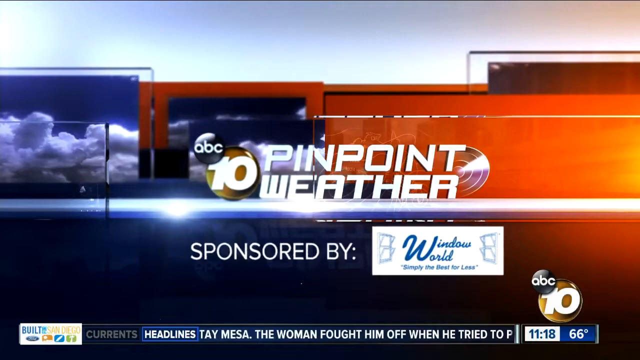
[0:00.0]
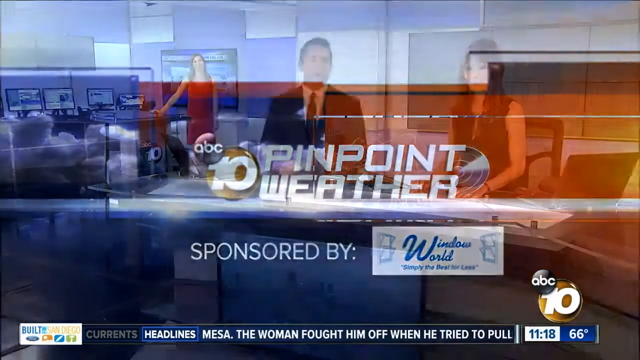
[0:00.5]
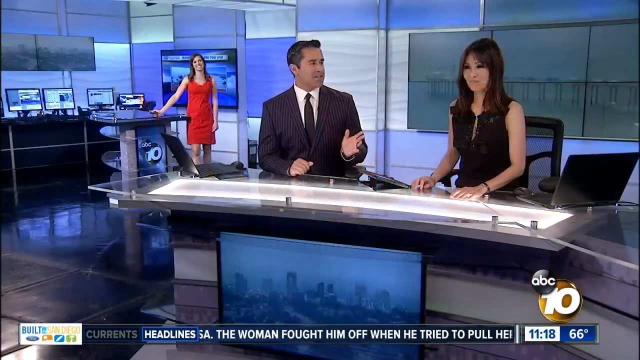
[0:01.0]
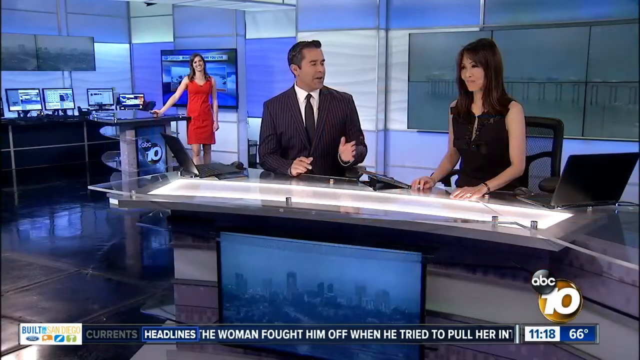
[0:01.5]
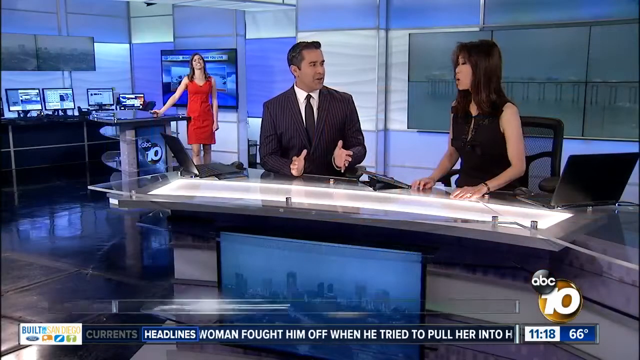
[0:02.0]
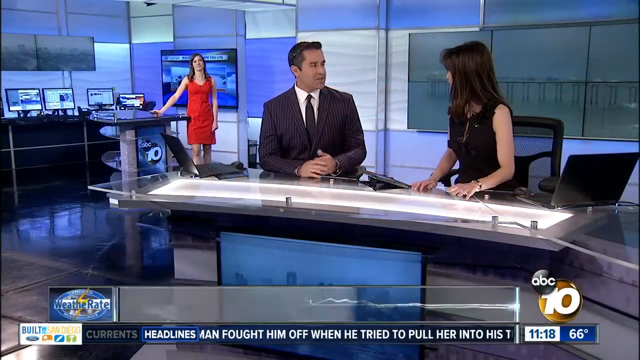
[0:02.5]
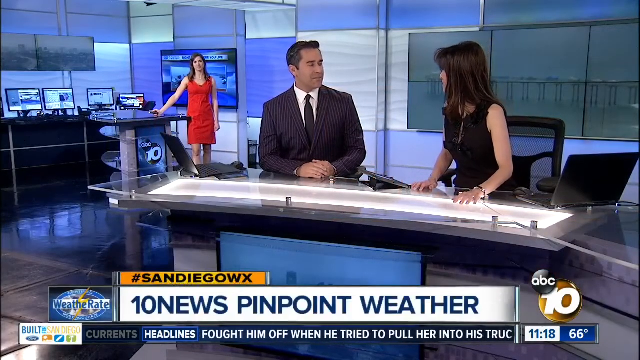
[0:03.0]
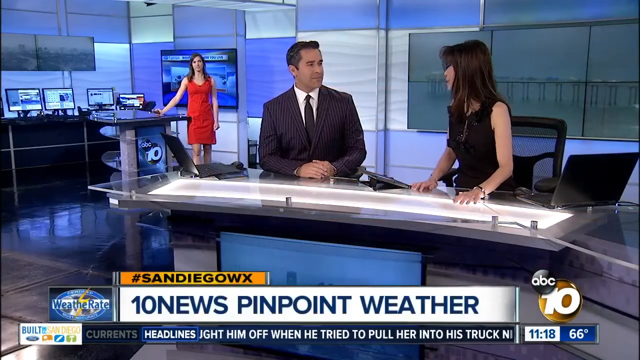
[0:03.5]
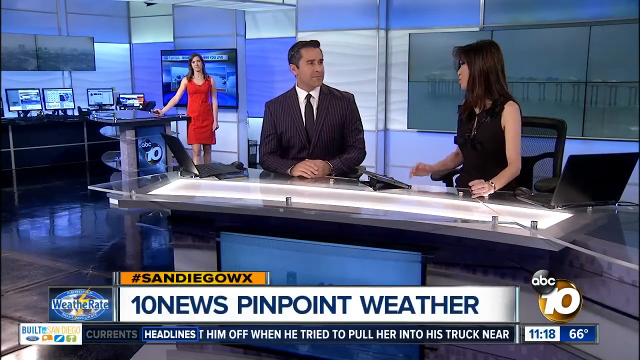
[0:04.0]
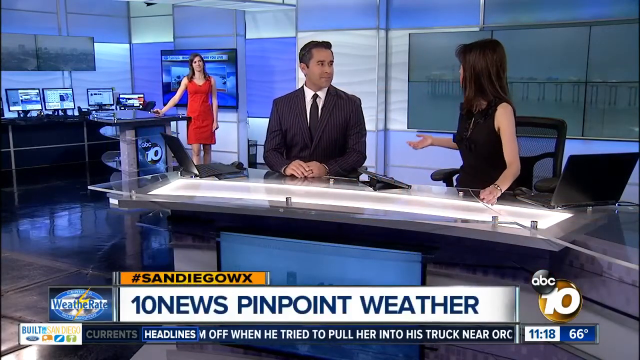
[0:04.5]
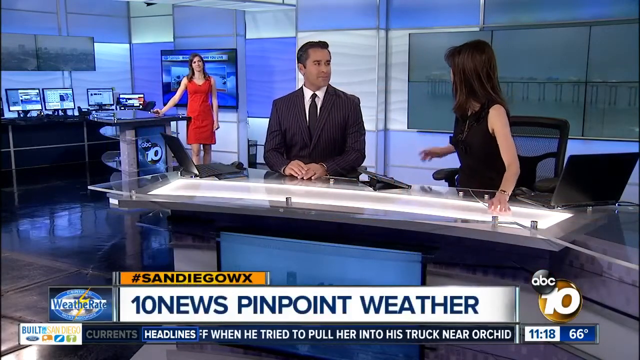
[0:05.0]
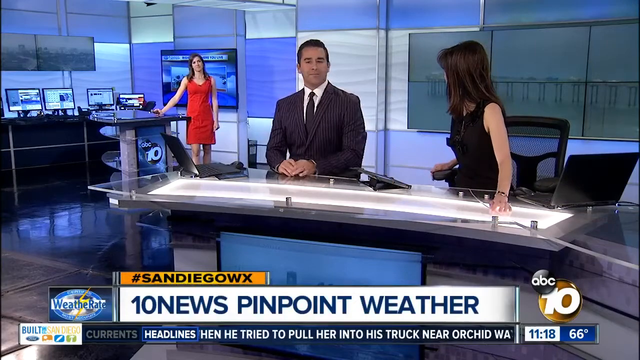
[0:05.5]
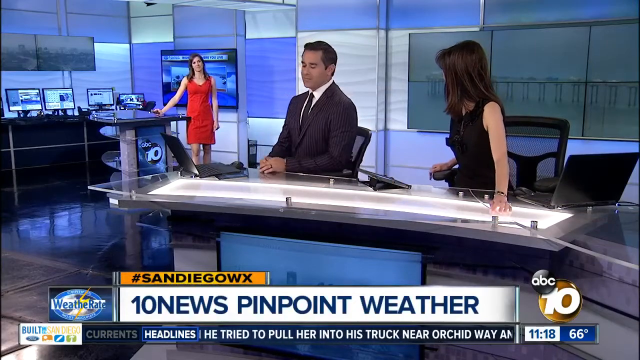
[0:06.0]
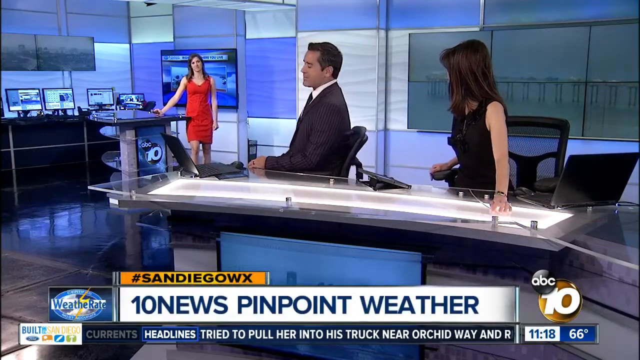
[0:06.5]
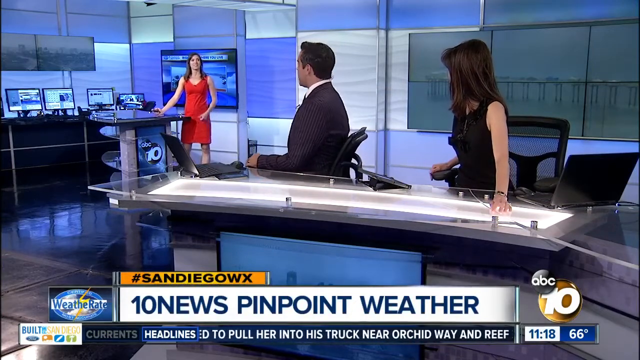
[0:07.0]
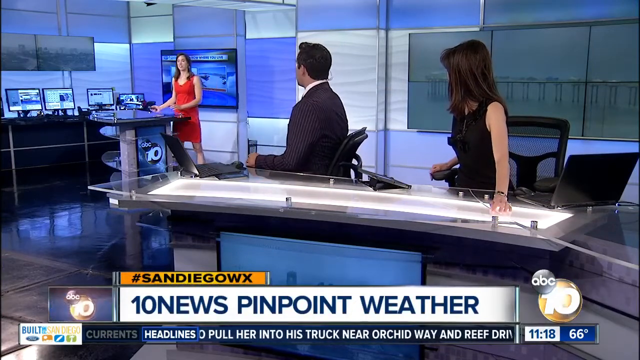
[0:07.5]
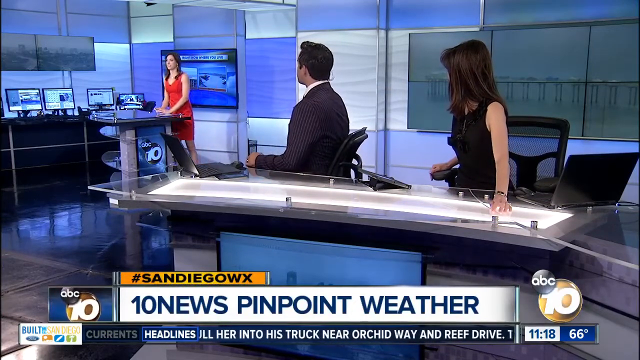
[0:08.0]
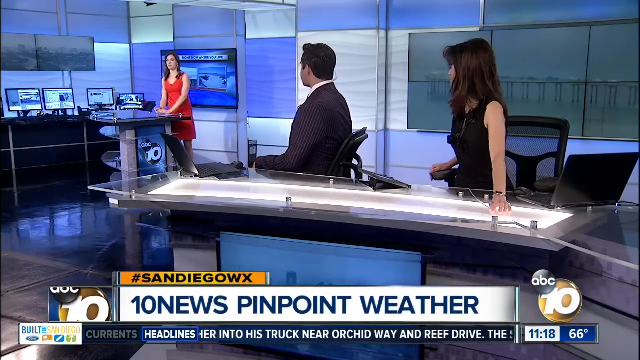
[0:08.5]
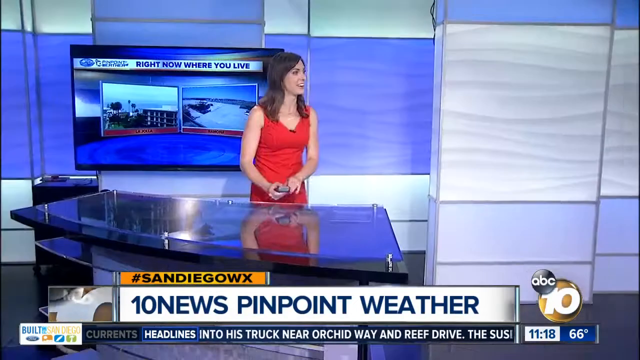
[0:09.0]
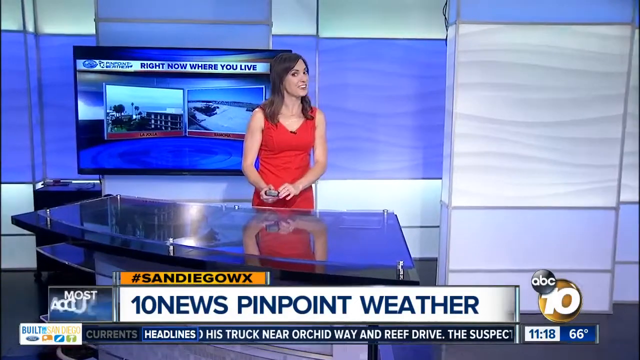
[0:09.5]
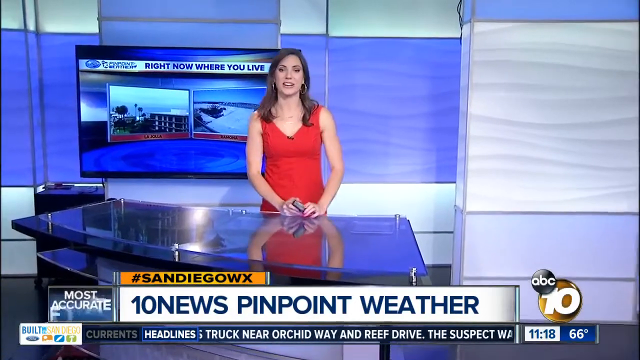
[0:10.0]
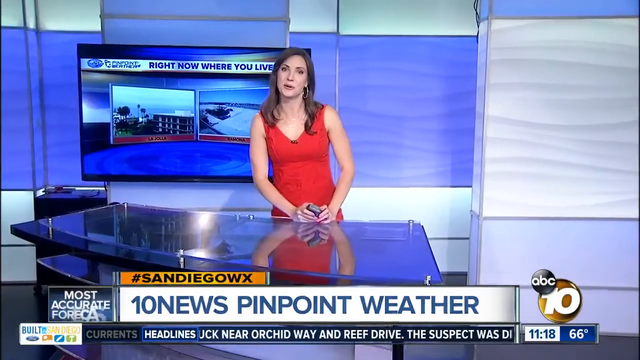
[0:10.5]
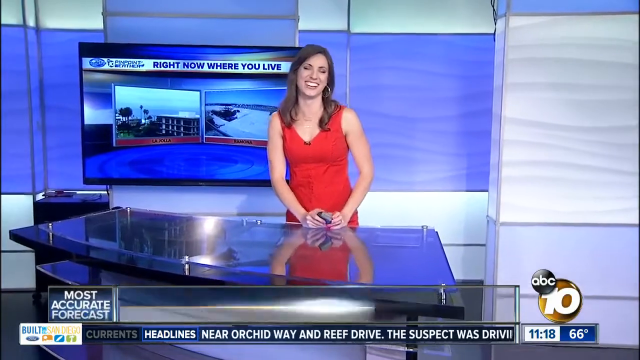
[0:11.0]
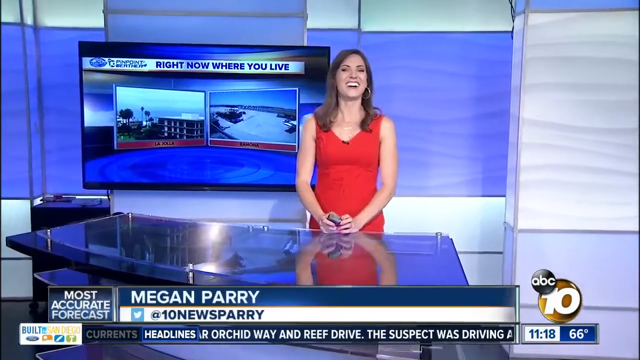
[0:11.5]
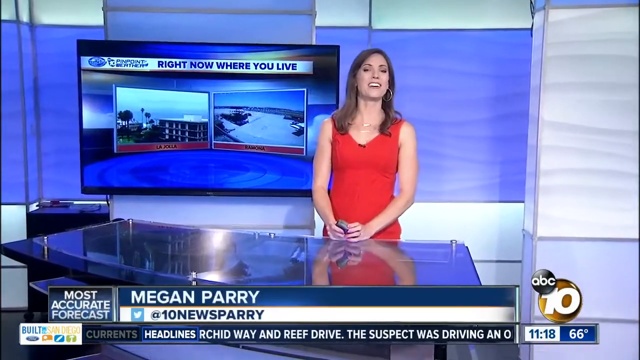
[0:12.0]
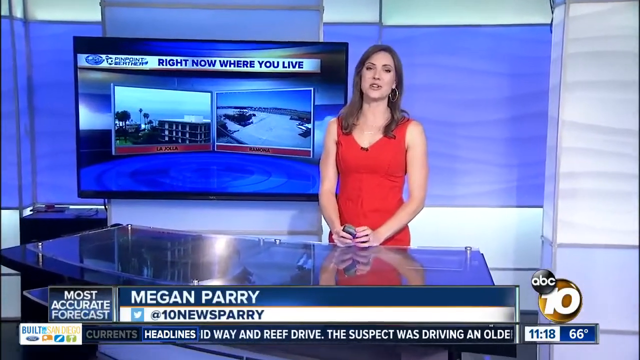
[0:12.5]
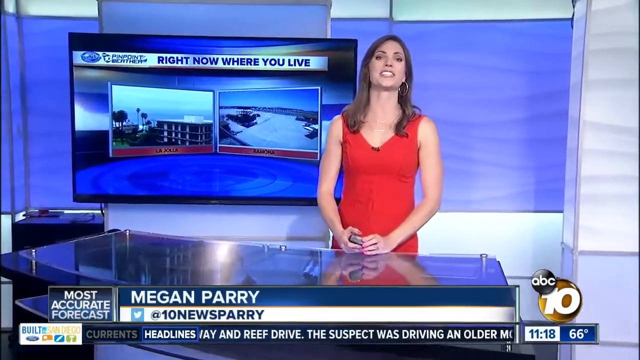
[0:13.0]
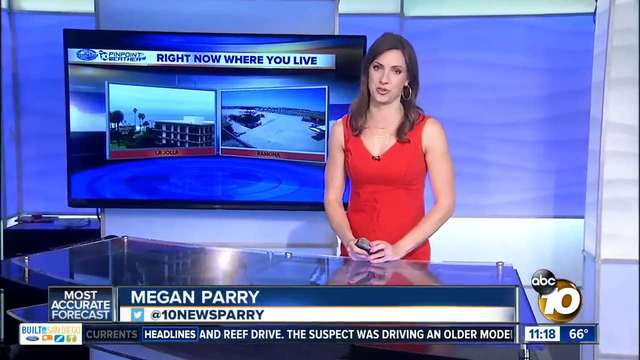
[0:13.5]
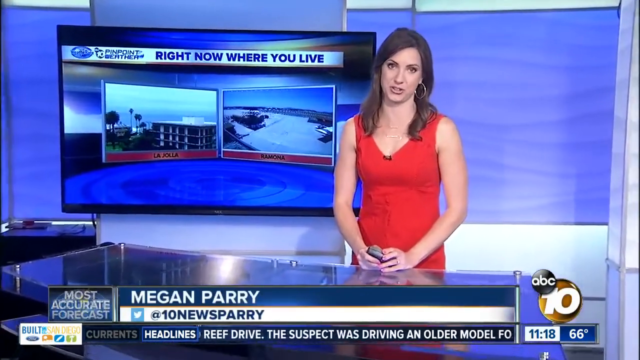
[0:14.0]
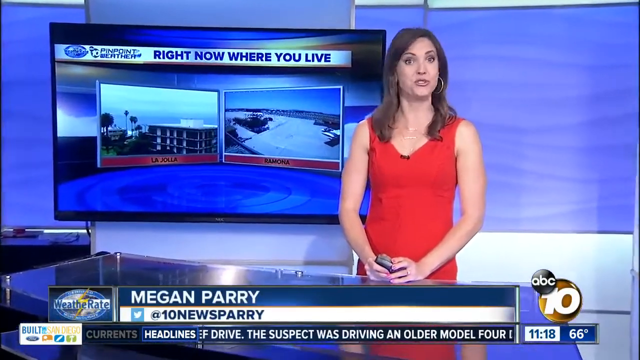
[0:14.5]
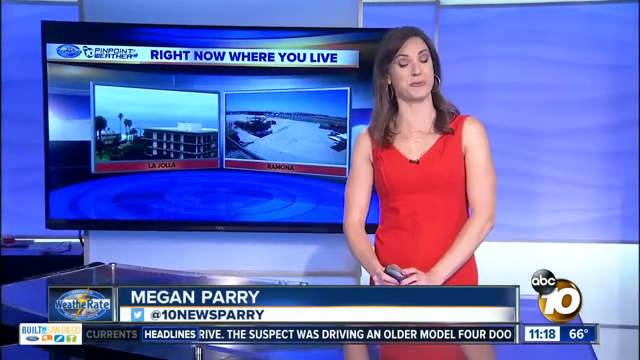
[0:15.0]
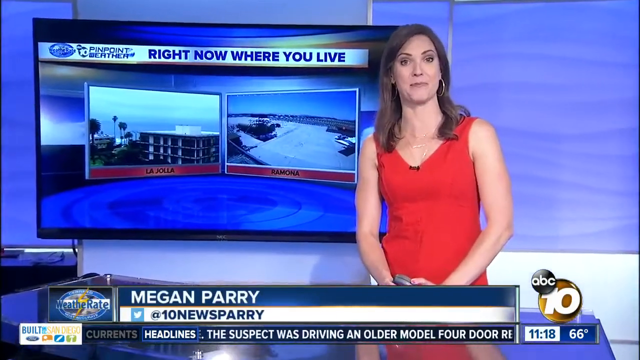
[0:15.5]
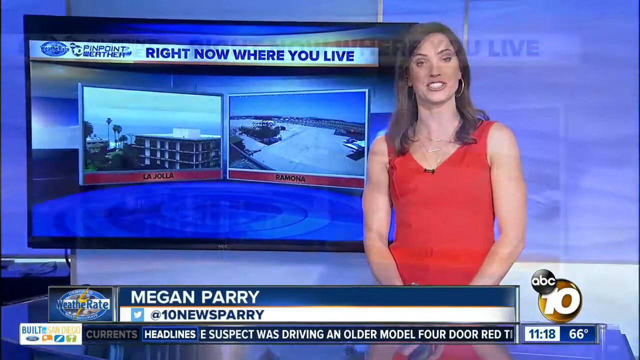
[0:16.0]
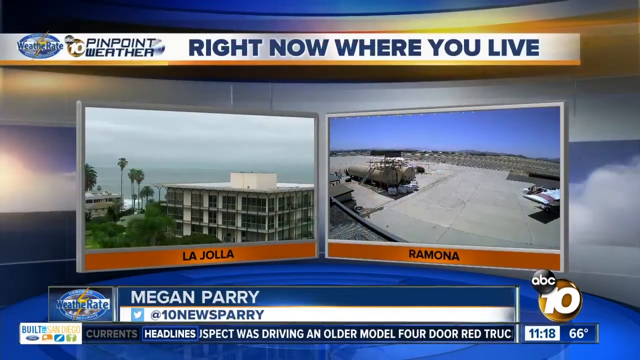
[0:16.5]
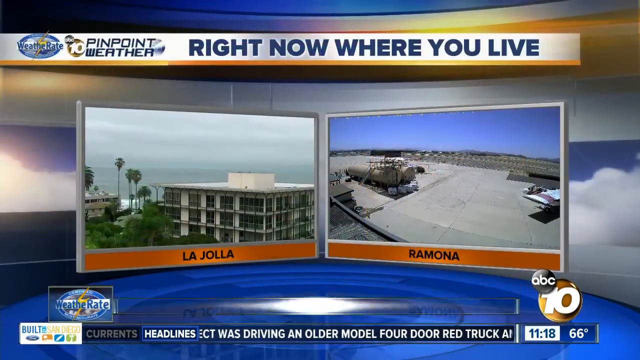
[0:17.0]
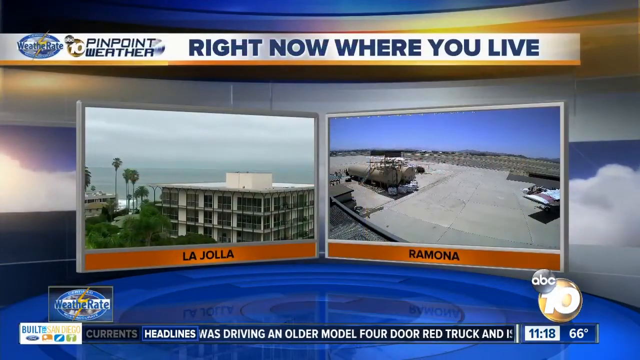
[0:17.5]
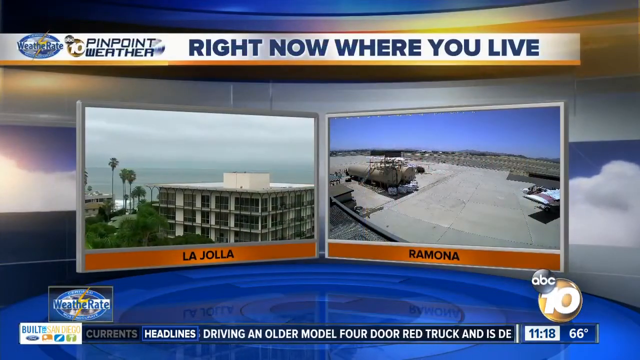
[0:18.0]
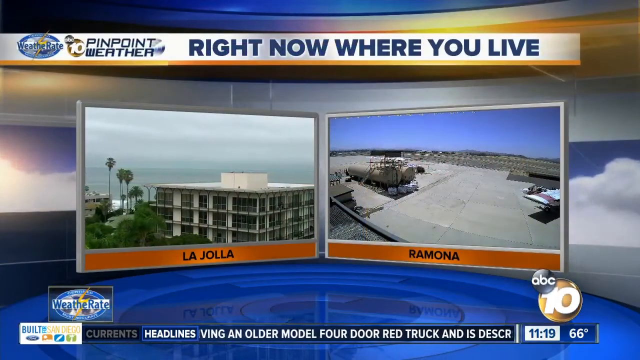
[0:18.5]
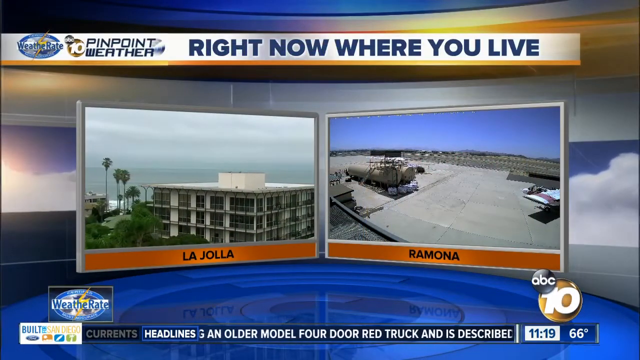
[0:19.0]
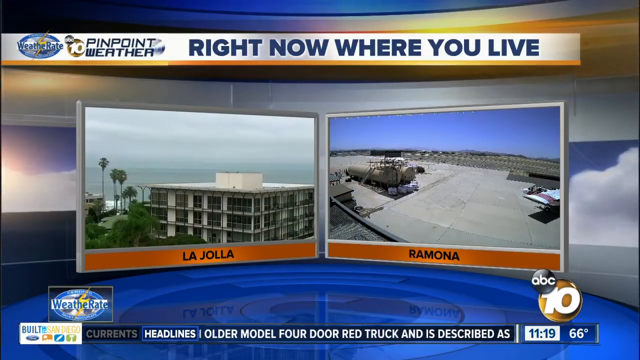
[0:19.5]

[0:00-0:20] The segment is 10 News Pinpoint Weather on the ABC 10 station, live from the studio. The presenter is named Megan Parry, and the text "right now where you live" appears. Two anchors hand over to another presenter, a woman in a red blouse who is standing ready to report. She shows two places, La Jolla and Ramona. The Pinpoint Weather segment is sponsored by Window World, with the slogan "simply the best for less."